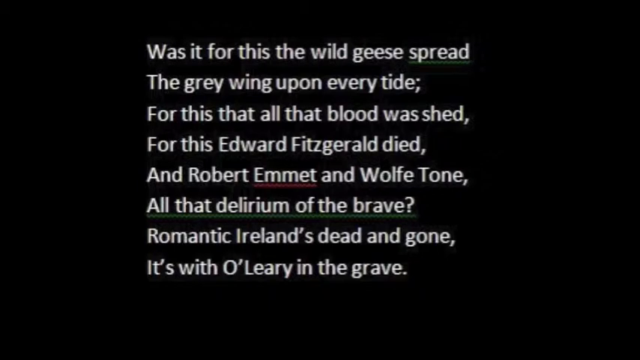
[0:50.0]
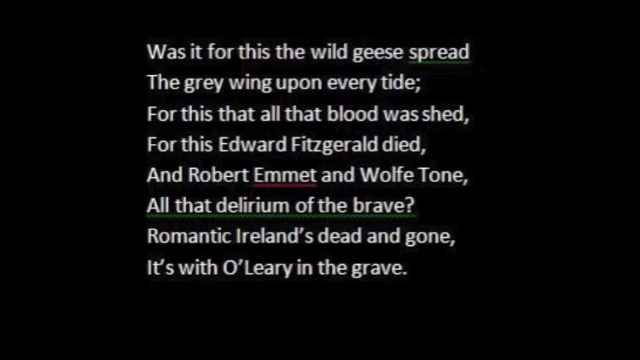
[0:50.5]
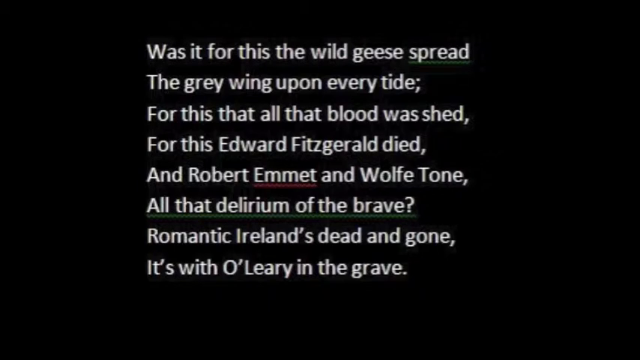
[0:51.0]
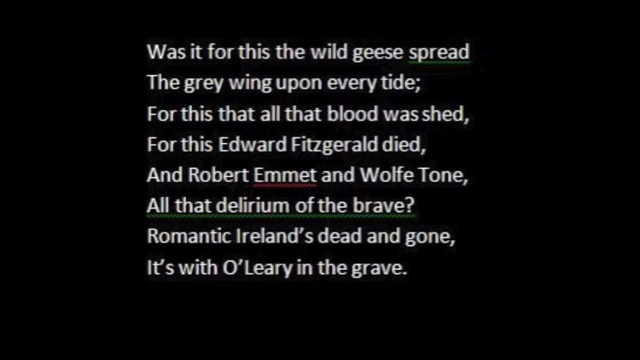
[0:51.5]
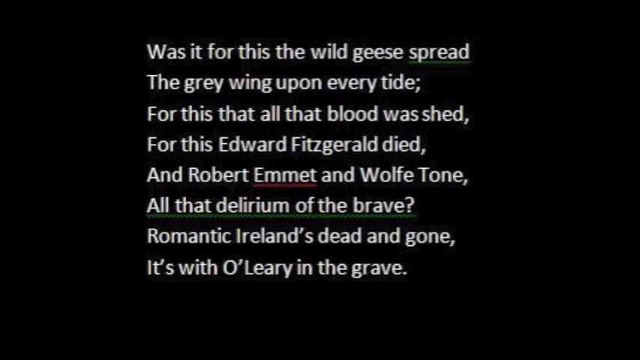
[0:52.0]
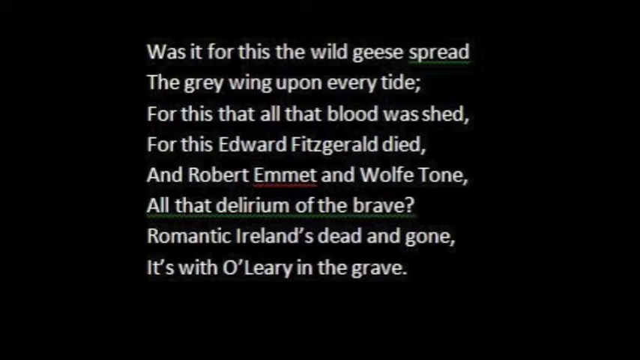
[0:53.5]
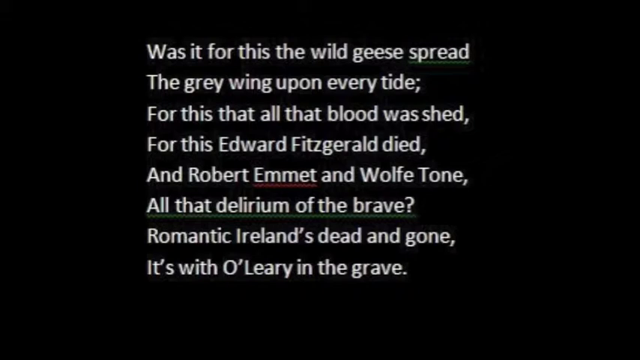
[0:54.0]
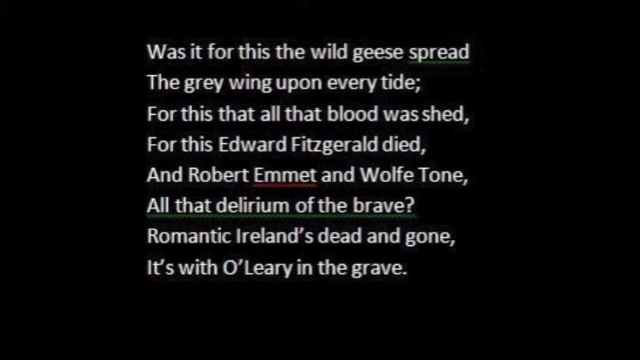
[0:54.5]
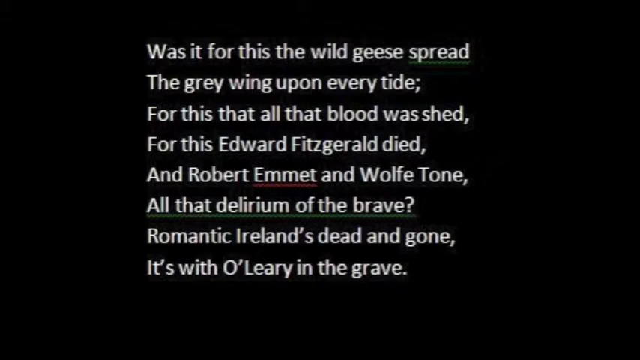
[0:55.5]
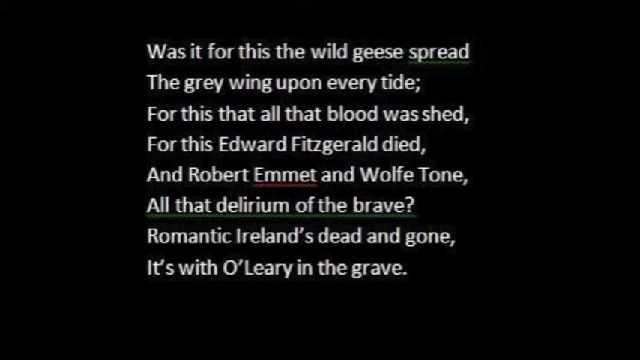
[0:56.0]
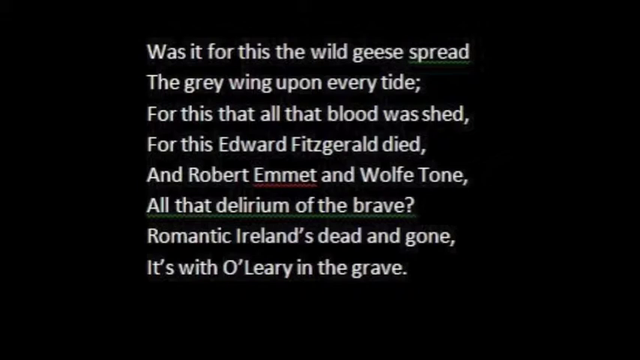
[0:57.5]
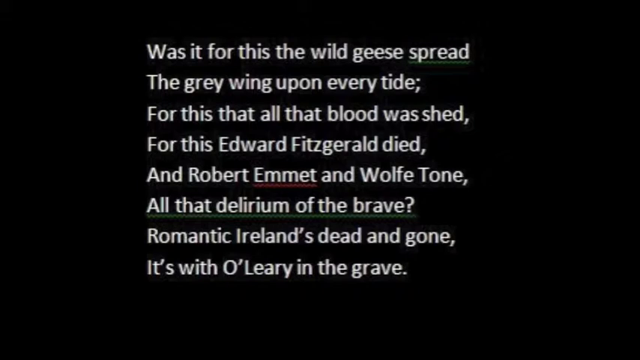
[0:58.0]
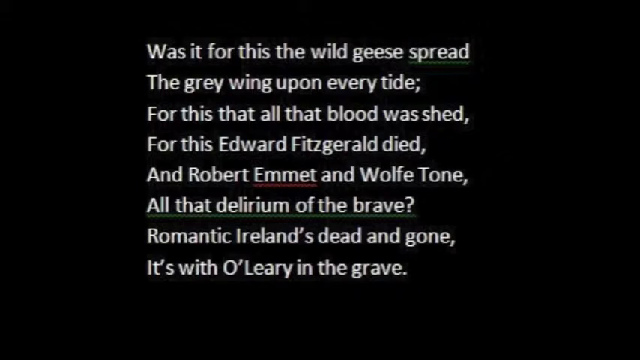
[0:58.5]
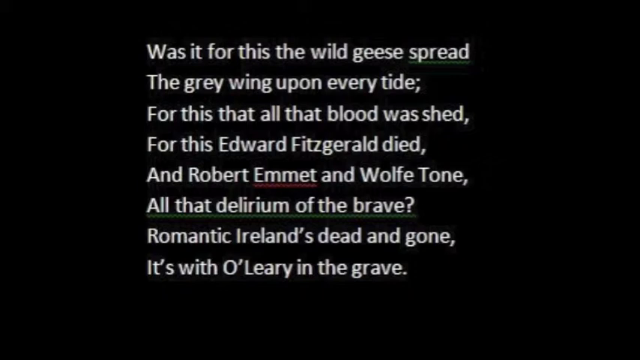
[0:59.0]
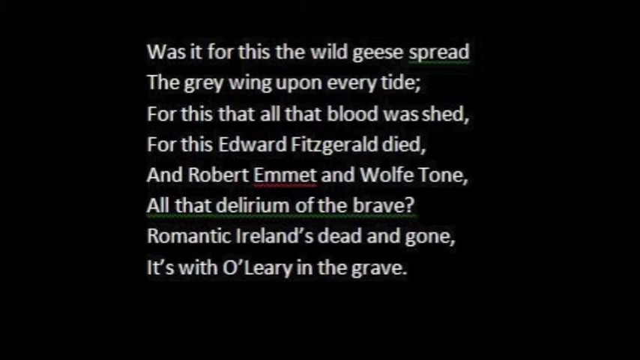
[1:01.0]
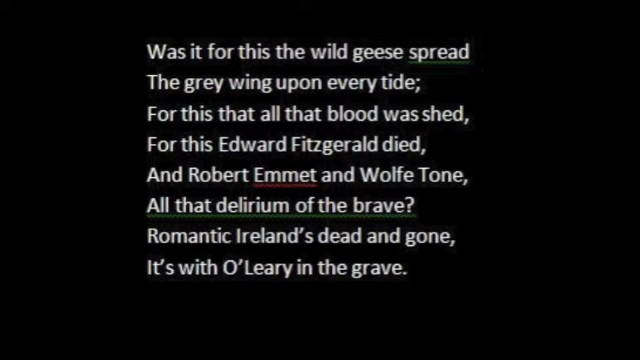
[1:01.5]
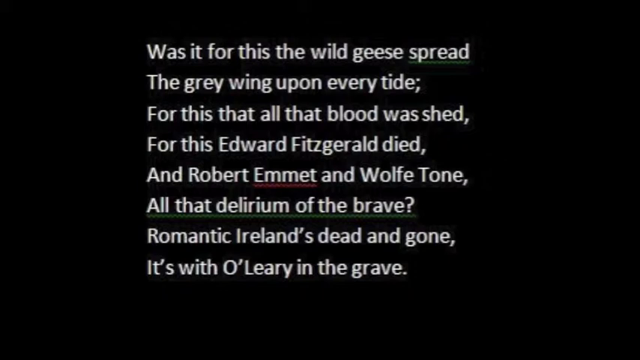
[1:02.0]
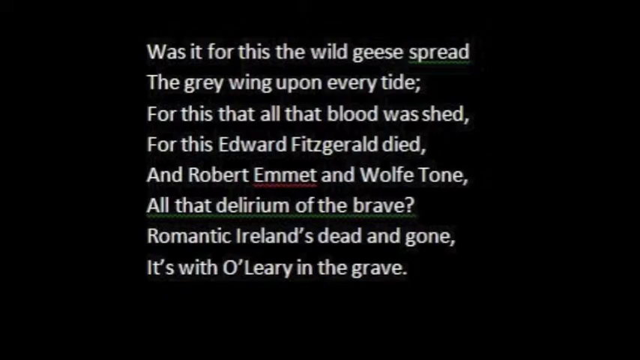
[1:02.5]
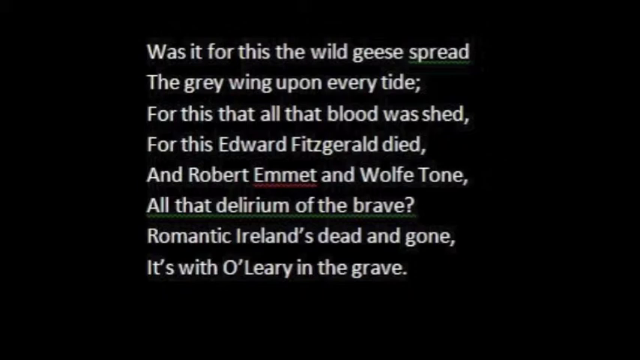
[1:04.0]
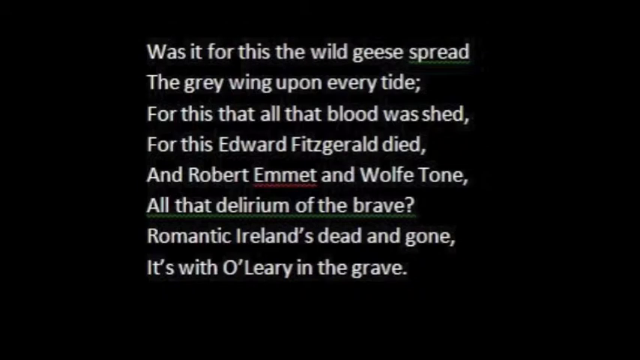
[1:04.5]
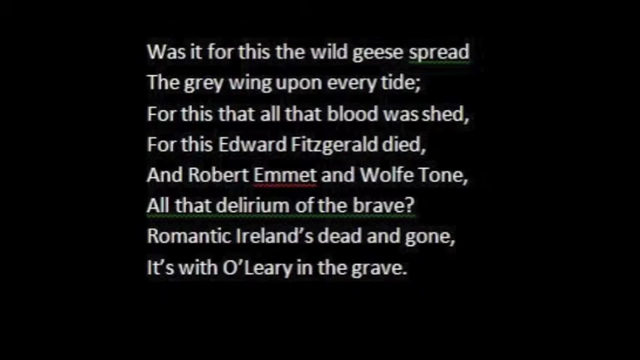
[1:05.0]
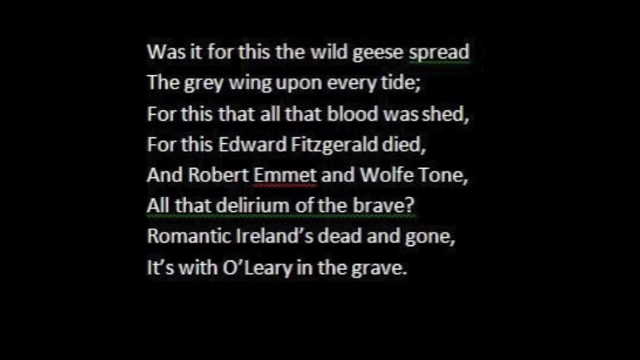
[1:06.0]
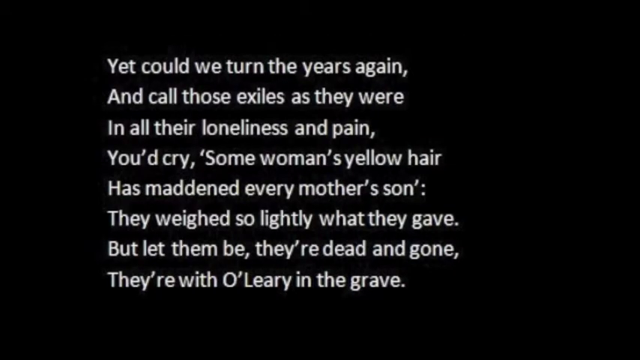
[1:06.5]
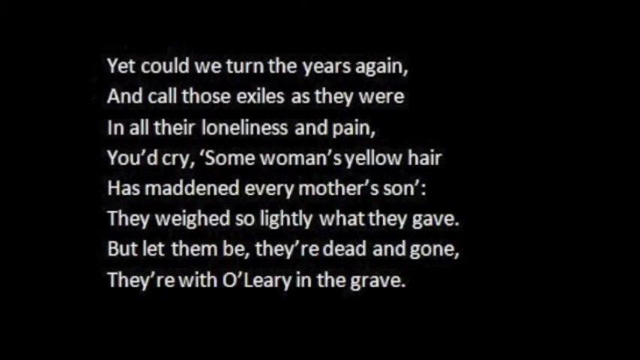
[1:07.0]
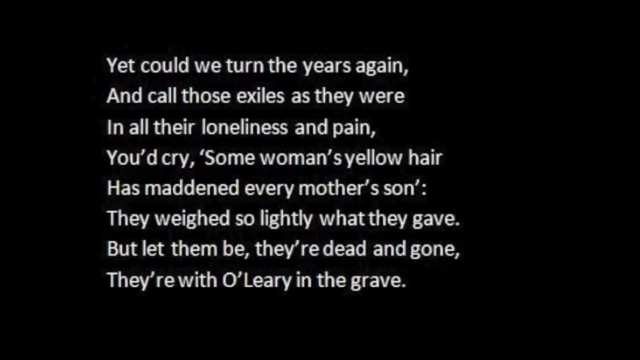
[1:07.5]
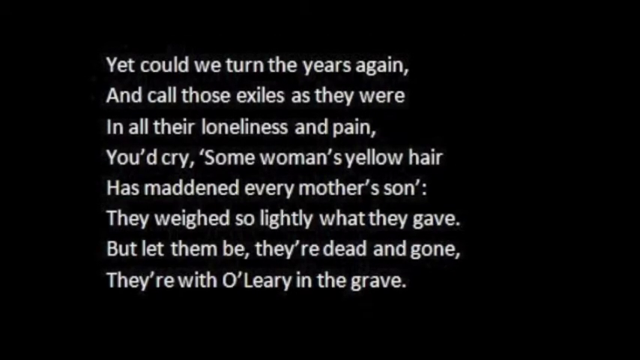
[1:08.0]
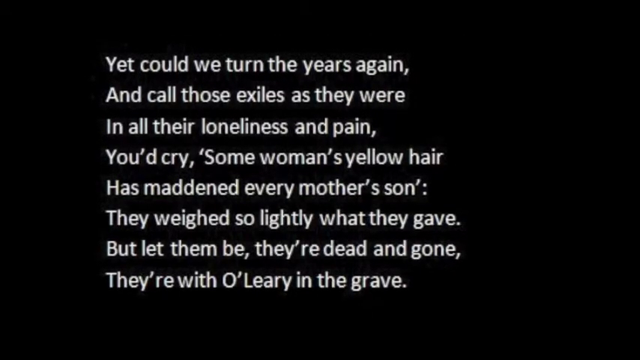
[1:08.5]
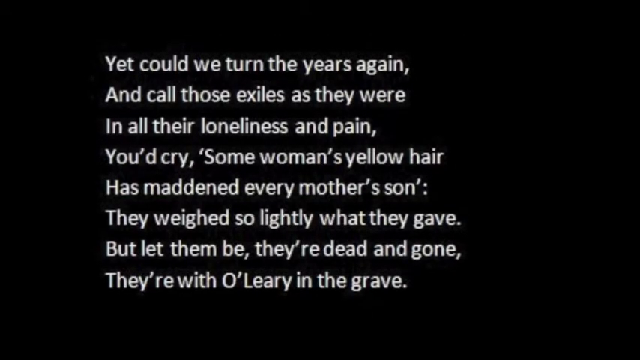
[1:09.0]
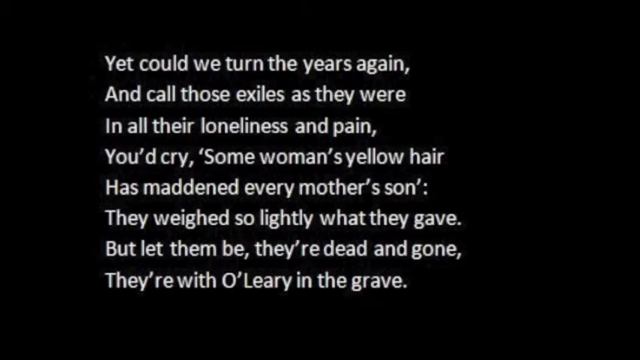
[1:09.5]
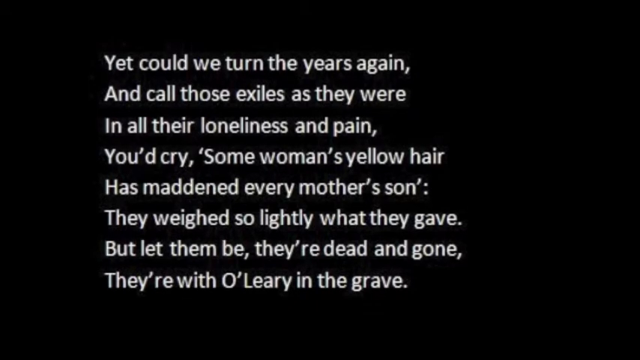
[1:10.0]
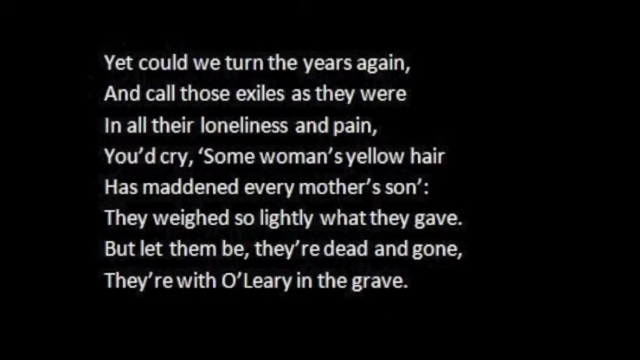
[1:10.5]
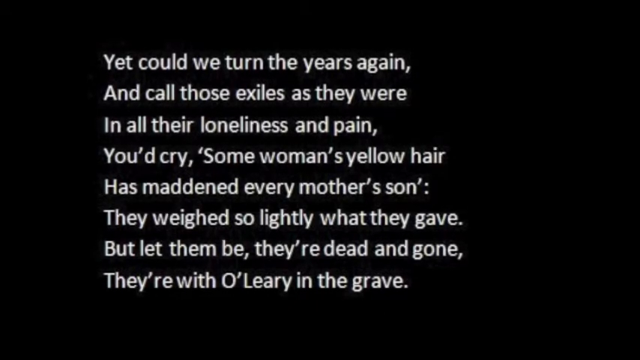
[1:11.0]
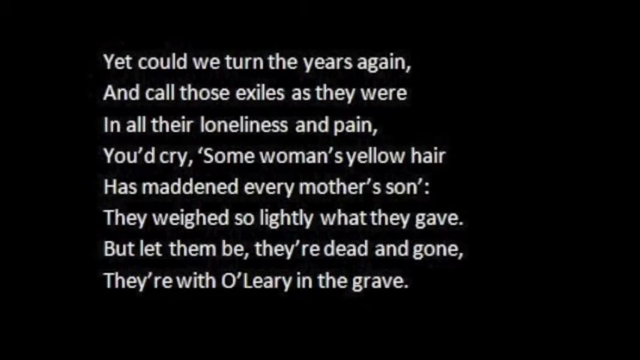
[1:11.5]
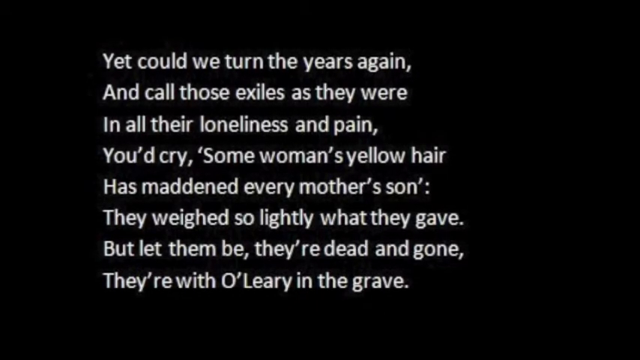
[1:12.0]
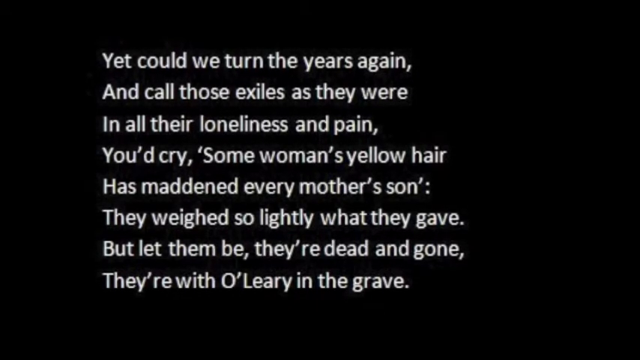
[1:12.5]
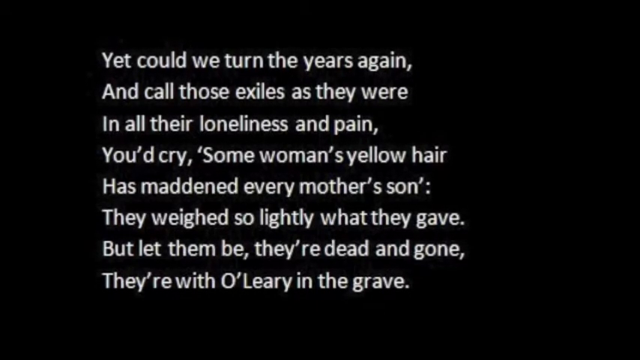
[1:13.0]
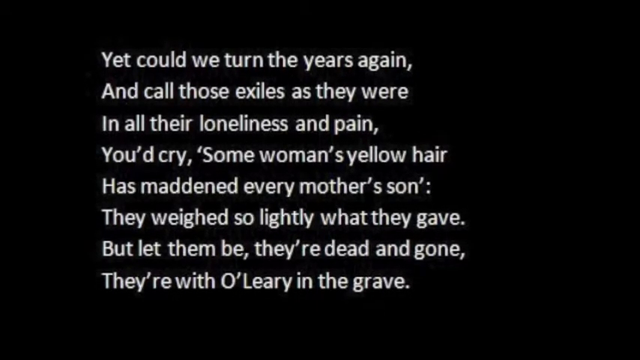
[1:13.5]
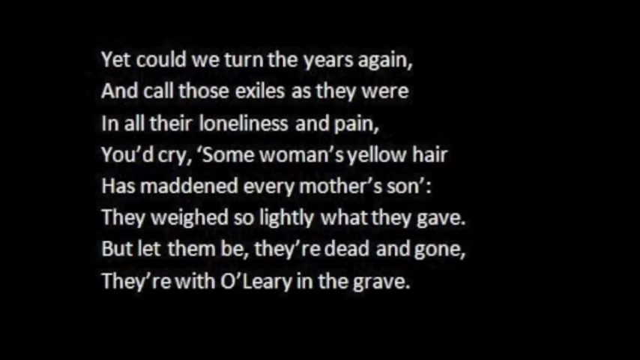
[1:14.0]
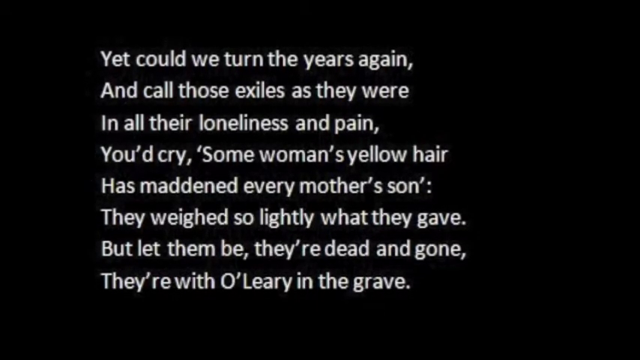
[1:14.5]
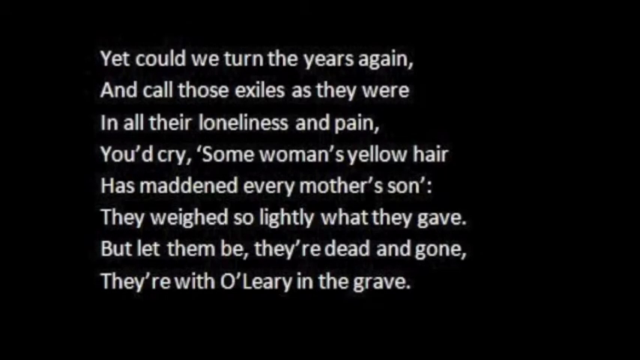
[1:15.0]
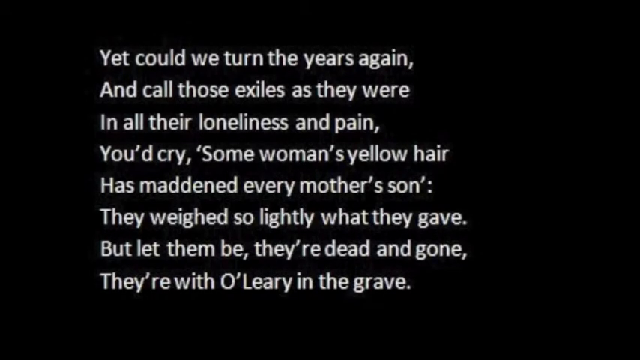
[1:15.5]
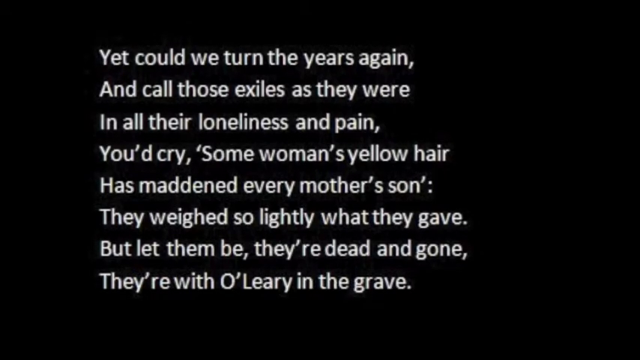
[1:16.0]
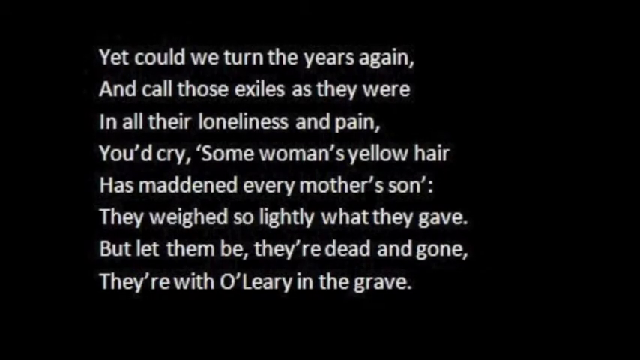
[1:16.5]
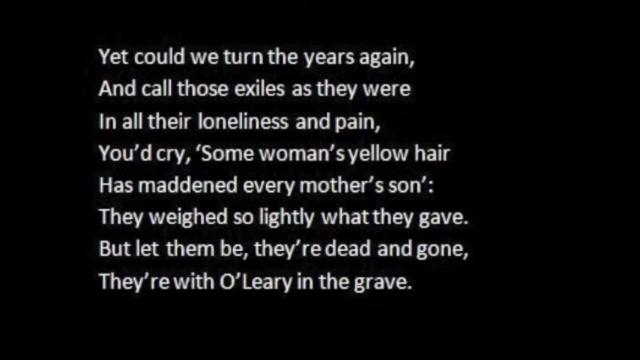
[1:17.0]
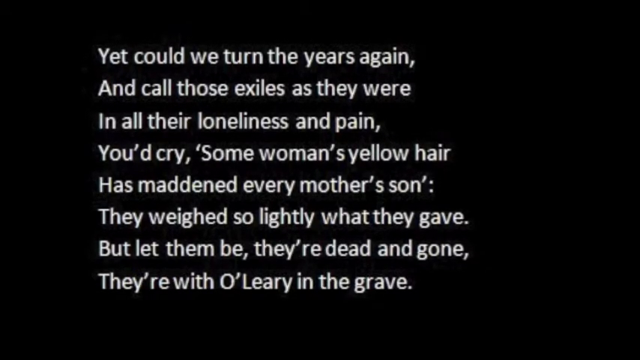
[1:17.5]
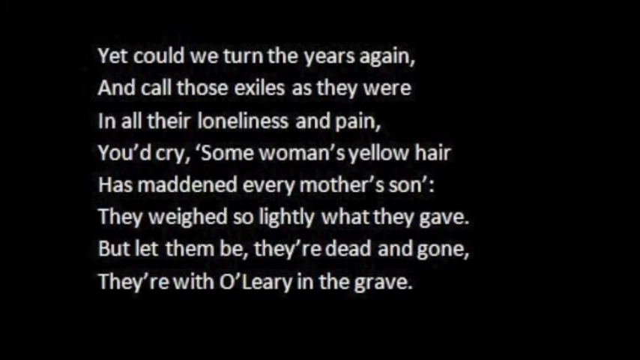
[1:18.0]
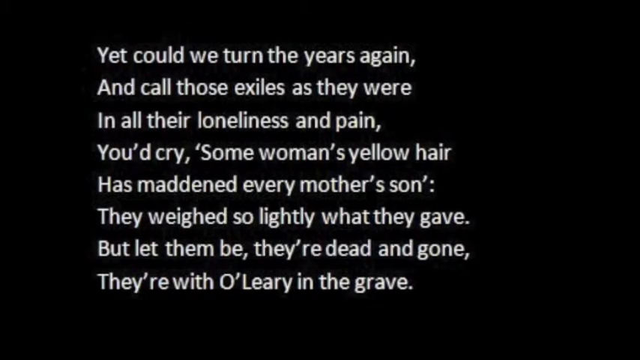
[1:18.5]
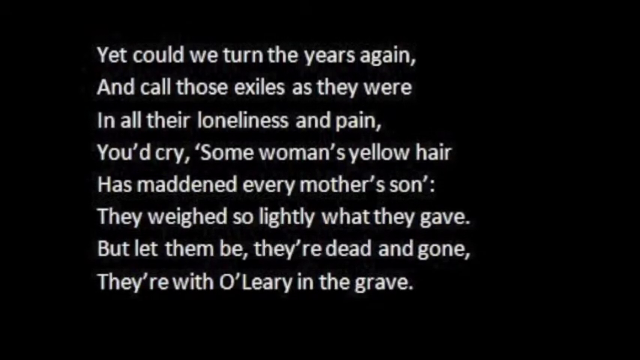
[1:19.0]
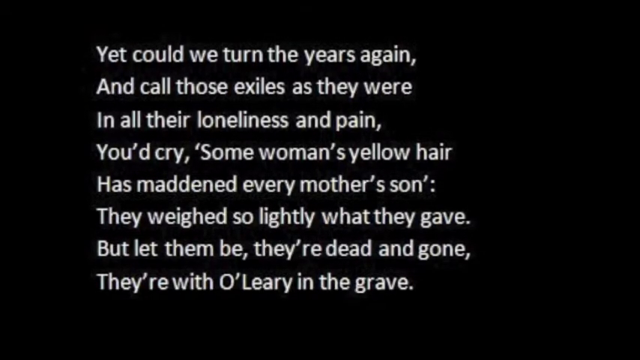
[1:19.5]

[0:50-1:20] Another part of the poem appears on screen: "Yet could we turn the years again and call those exiles as they were and all their loneliness and pain you'd cry some woman's yellow hair has maddened every mother's son they weighed so lightly what they gave but let them be they're dead and gone they're with O'Leary in the grave". The poem stays on the screen for quite a while, and the line "they're with O'Leary in the grave" recurs as a refrain.